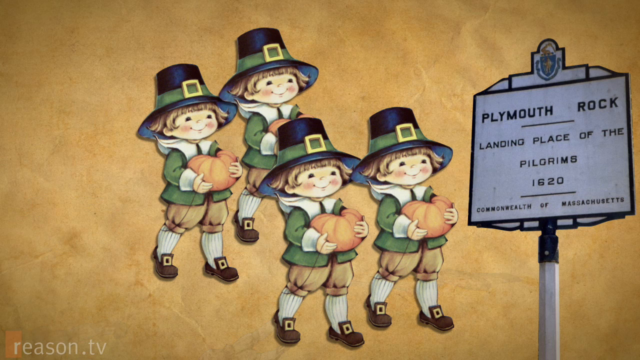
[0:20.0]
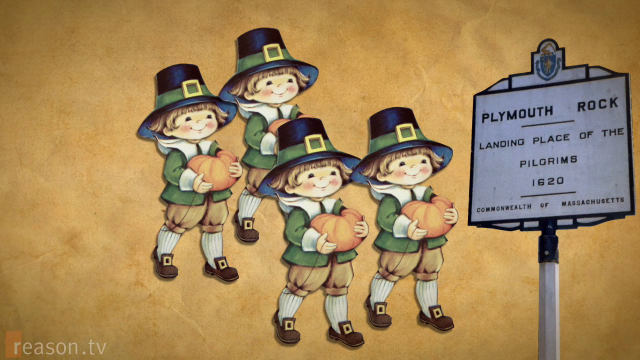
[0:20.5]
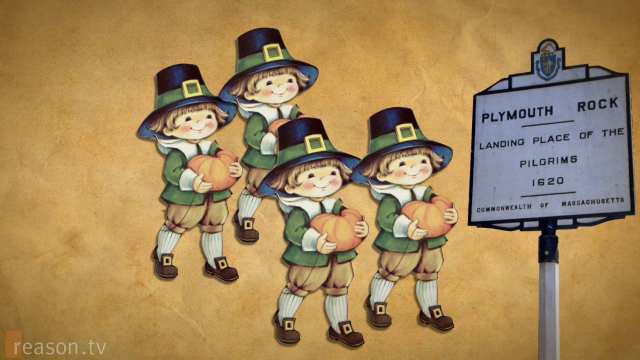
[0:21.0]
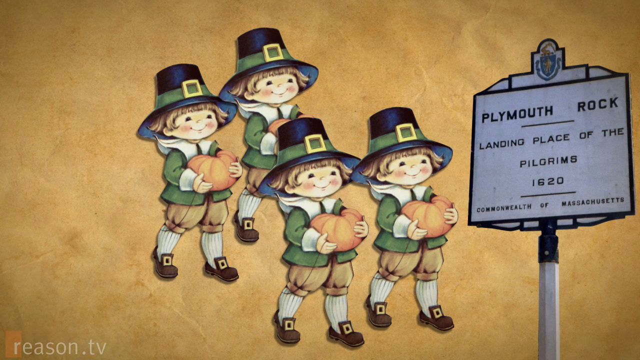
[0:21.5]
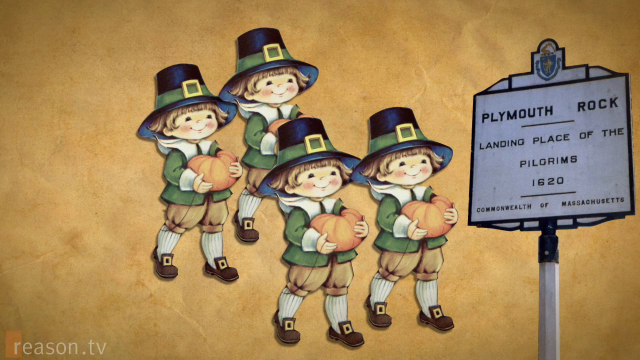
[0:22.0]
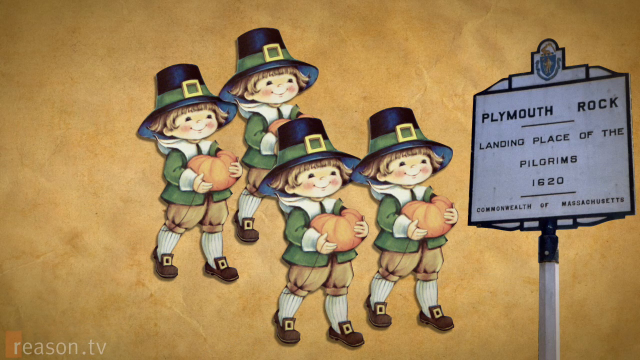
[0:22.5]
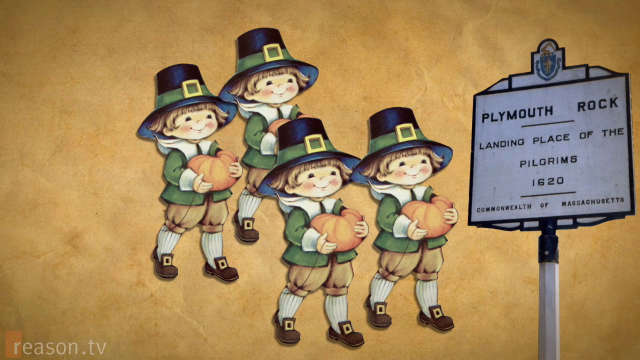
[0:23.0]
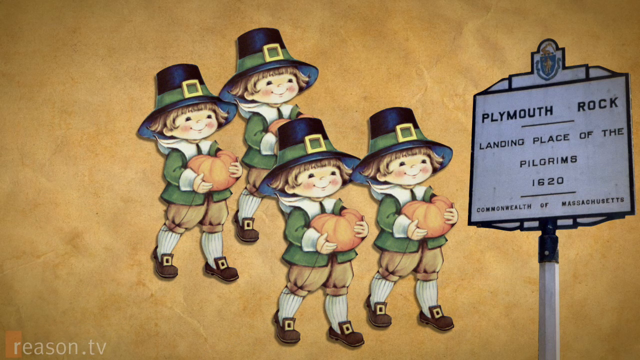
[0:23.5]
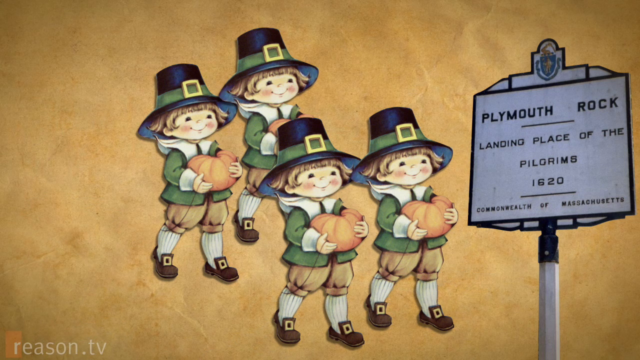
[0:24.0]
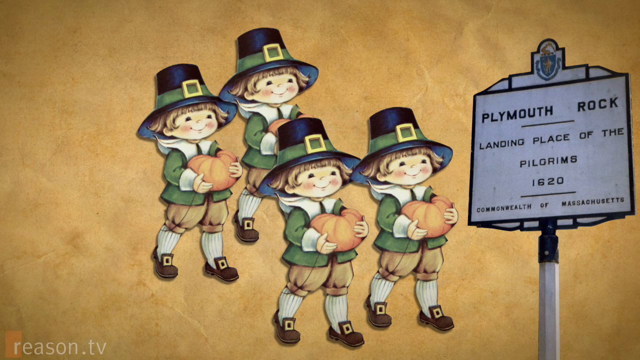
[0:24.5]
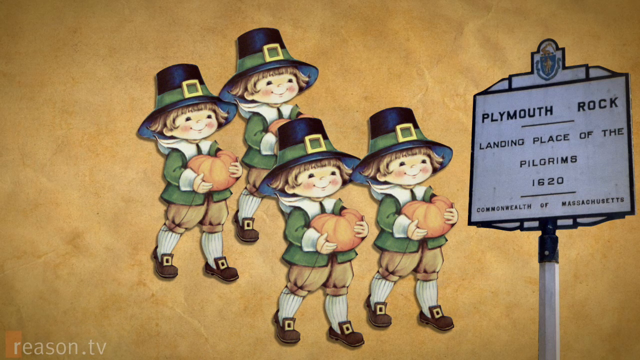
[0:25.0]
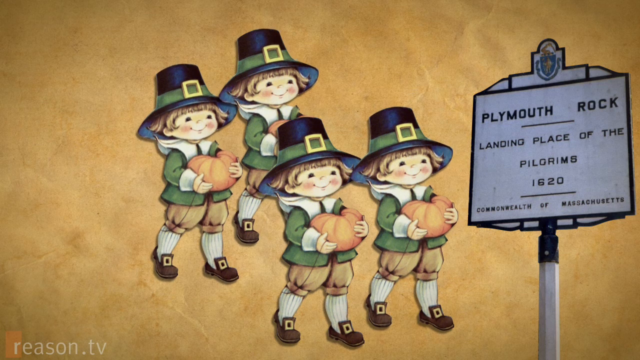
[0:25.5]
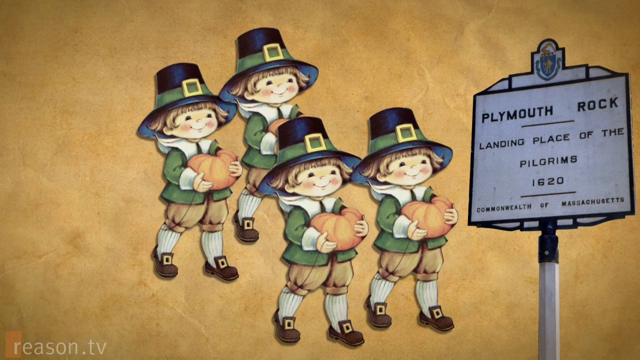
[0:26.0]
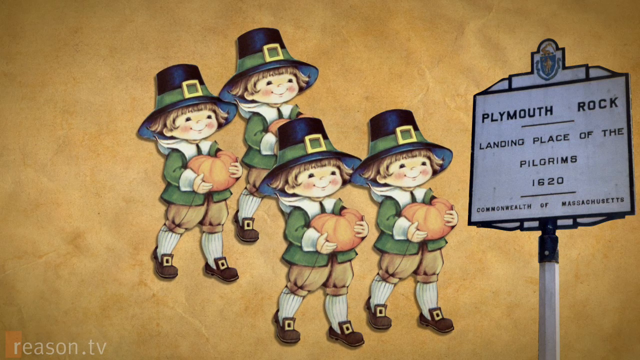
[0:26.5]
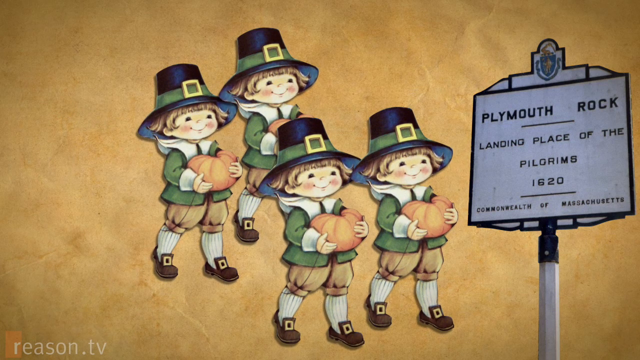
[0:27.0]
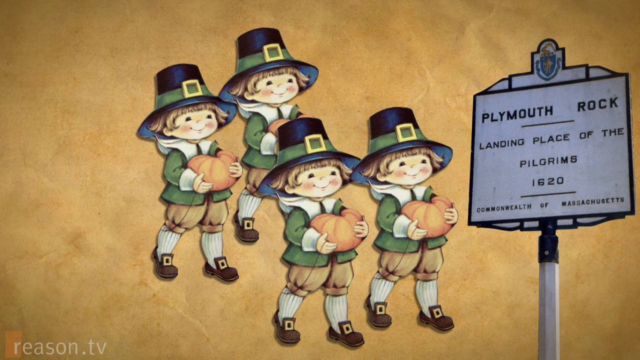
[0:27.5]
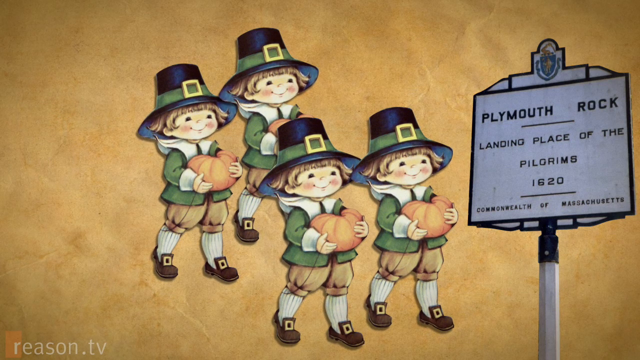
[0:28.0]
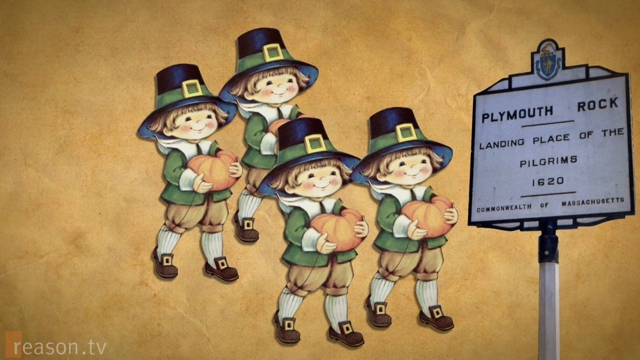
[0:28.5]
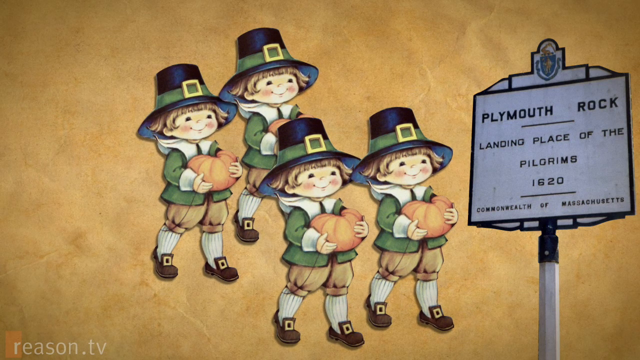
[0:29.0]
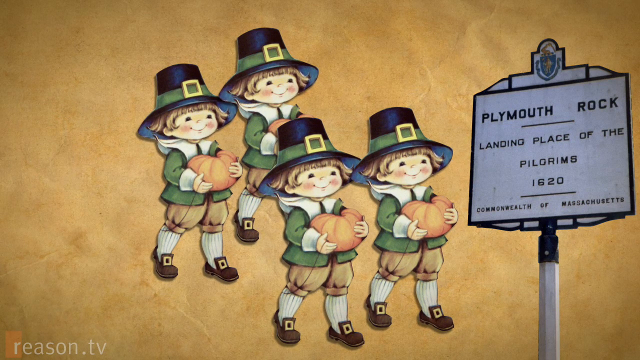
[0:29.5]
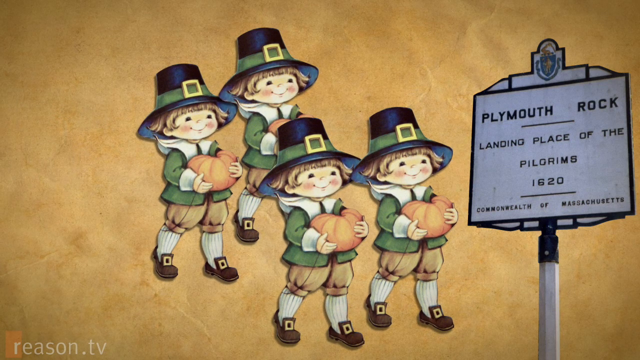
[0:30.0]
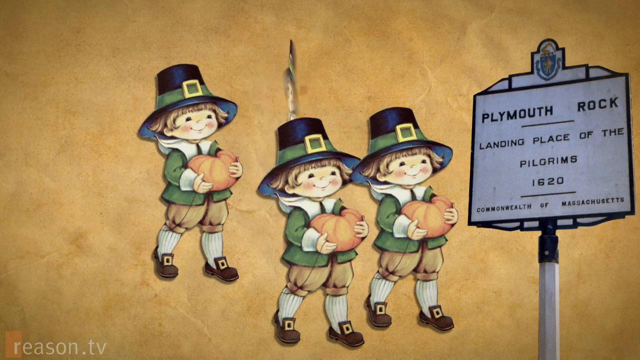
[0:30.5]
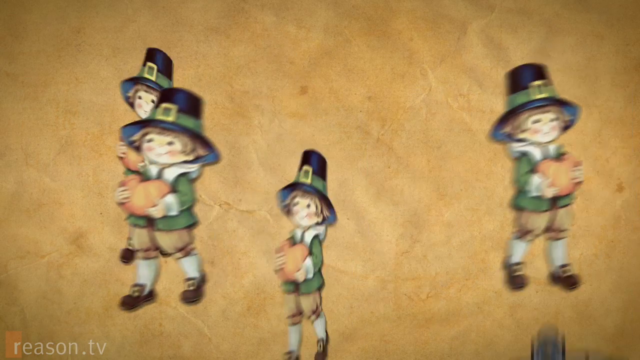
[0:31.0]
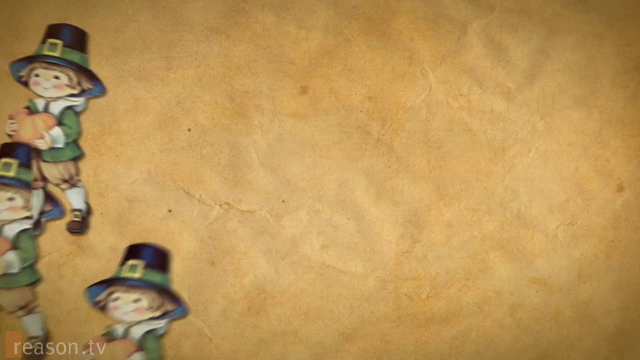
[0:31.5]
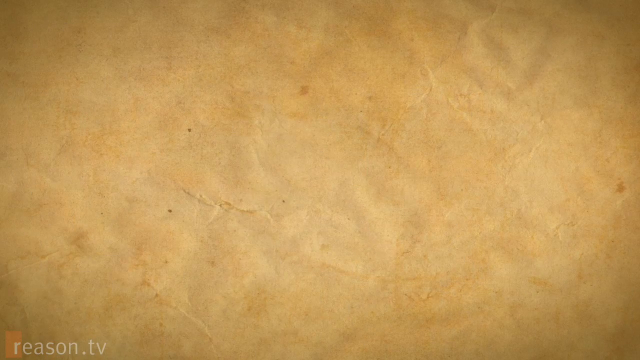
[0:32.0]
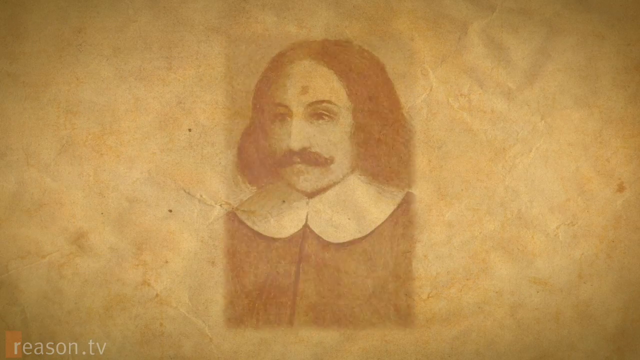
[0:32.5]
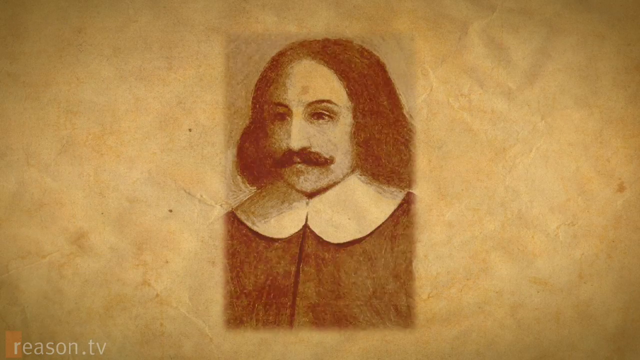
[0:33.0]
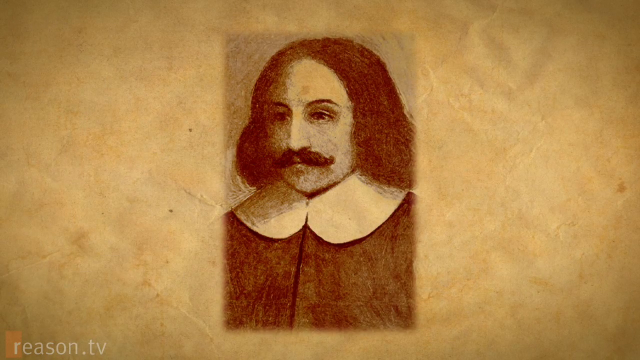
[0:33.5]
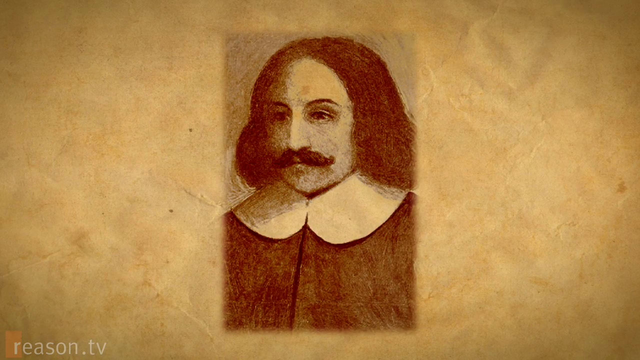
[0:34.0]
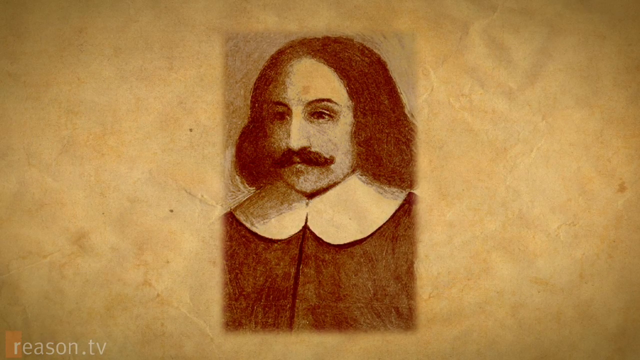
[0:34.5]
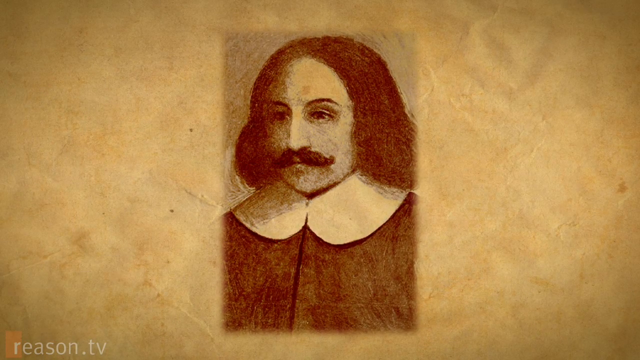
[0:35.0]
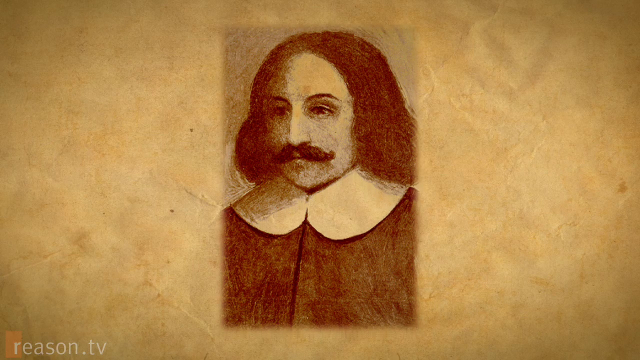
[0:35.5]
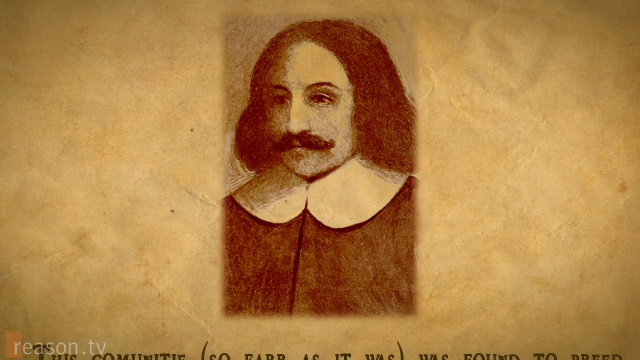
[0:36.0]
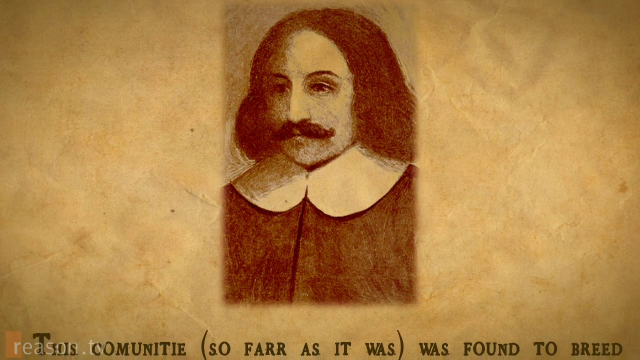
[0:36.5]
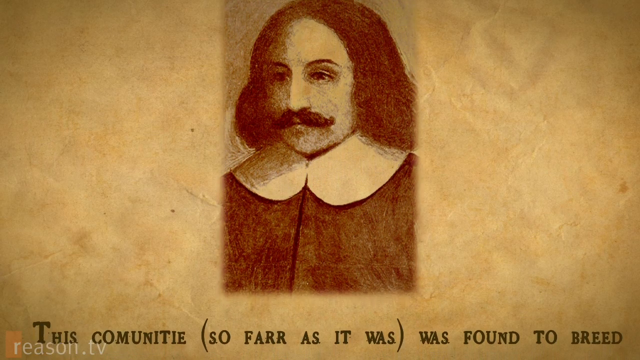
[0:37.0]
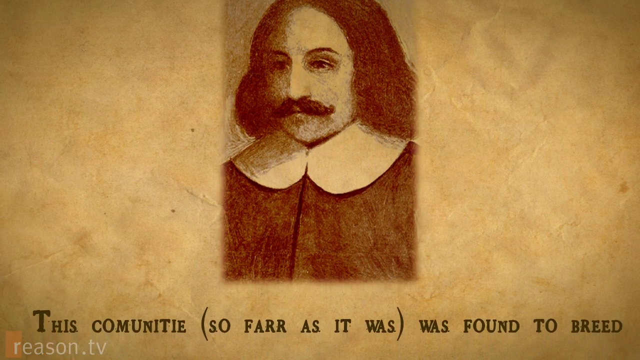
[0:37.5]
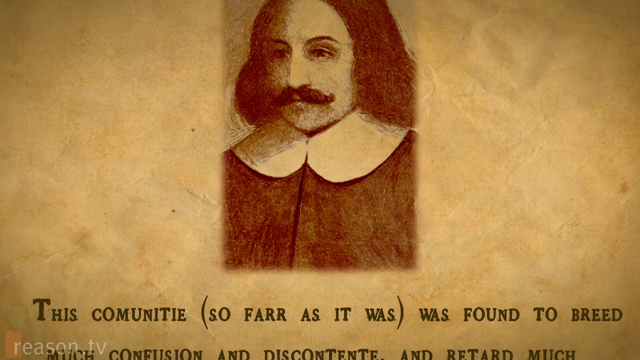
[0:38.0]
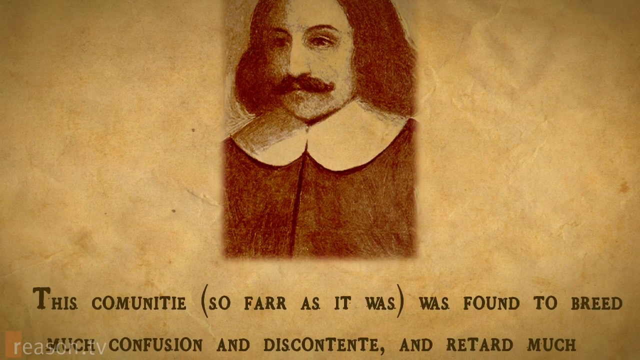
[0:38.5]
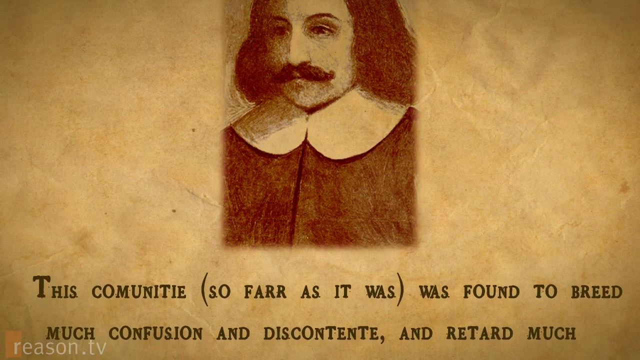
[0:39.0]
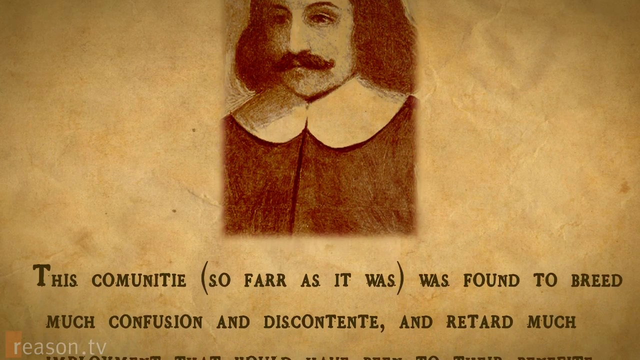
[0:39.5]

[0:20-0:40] The four little digital pilgrim kids are kind of bouncing while standing in front of the sign. They all go off in different directions and leave the screen, as does the sign. An image appears of a man from a very long time ago, with long hair down to his shoulders, a mustache, and hair parted down the middle. He wears some type of jacket with a really thick white collar that lays down flat, and the image has no color. His image moves up the screen and text plays that says "this commute so far as it was, was found to breed much confusion and discontent and retard much." Then the screen goes blank.